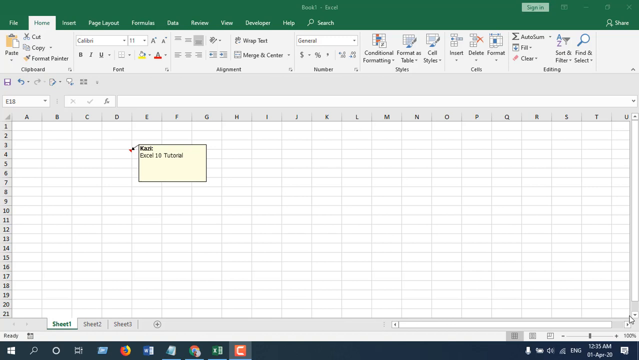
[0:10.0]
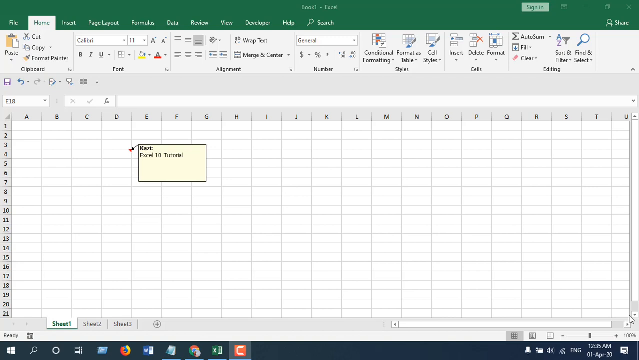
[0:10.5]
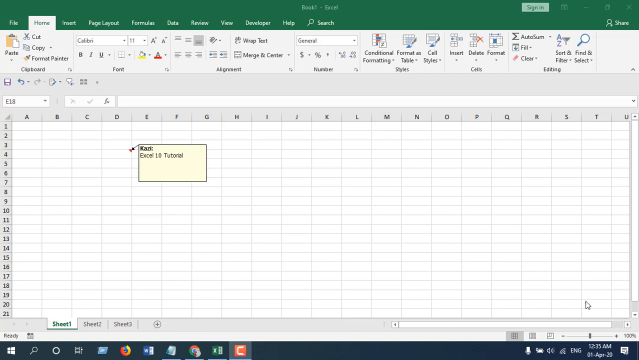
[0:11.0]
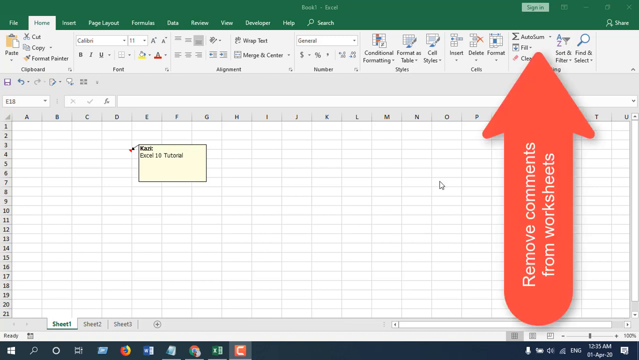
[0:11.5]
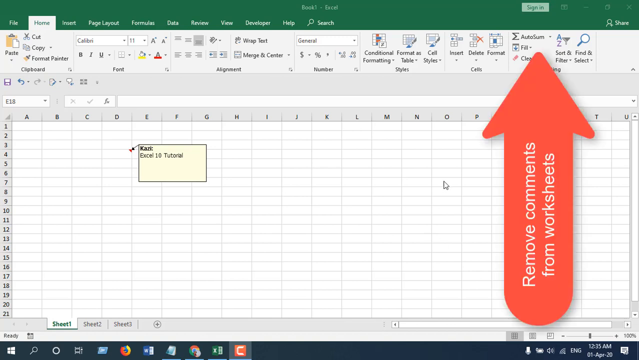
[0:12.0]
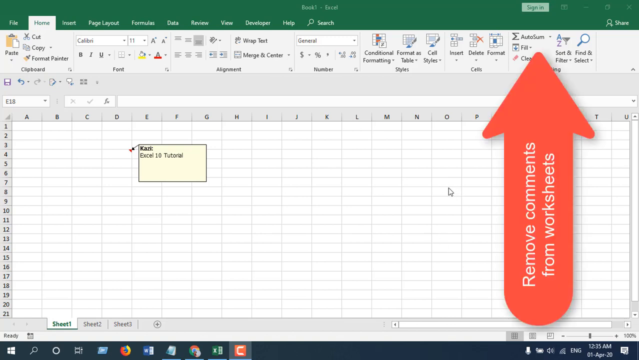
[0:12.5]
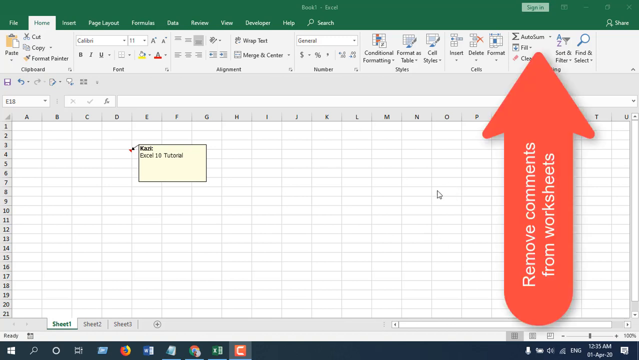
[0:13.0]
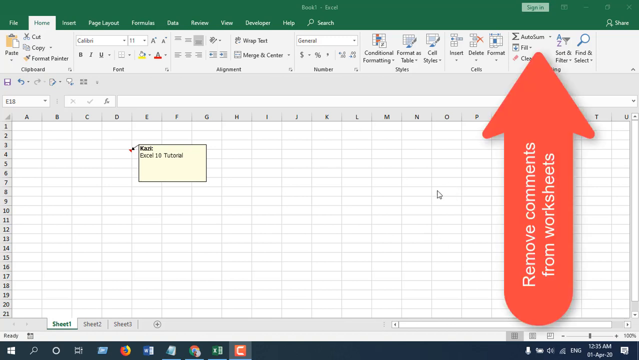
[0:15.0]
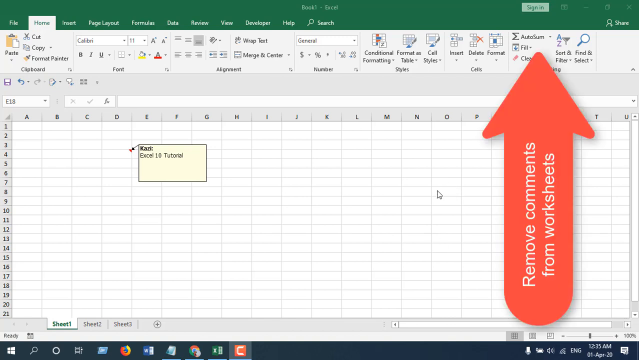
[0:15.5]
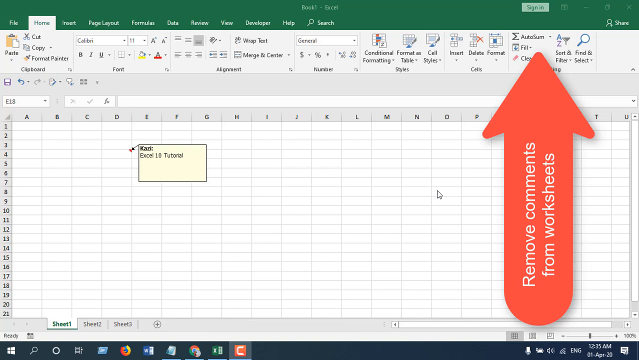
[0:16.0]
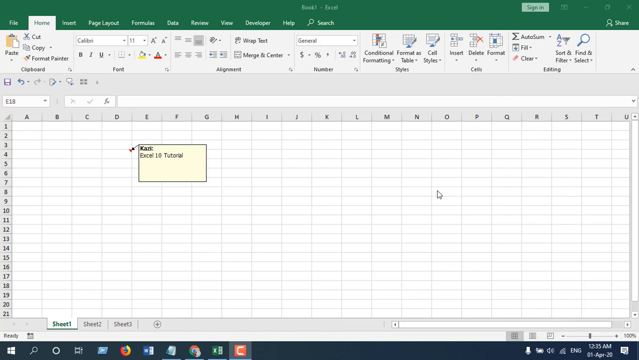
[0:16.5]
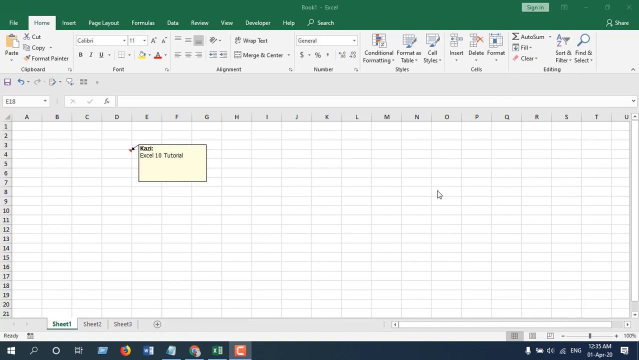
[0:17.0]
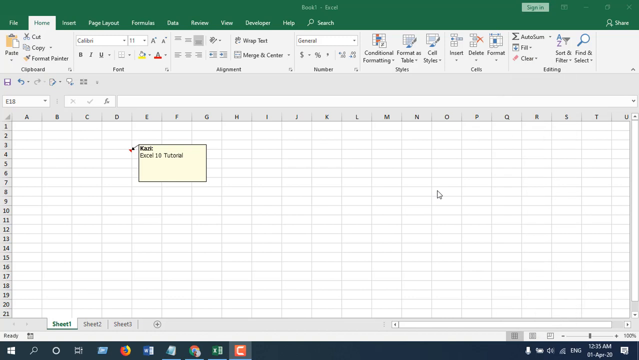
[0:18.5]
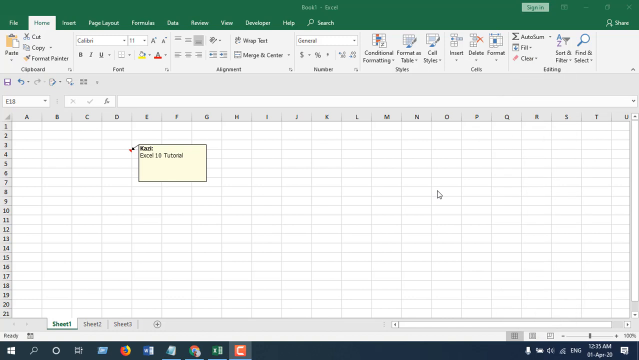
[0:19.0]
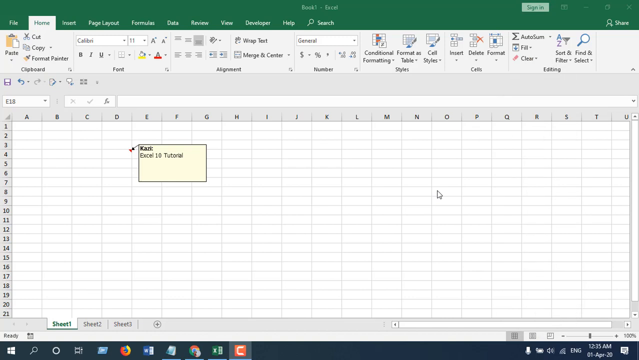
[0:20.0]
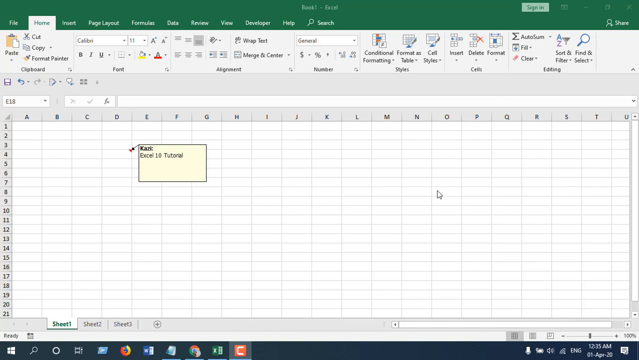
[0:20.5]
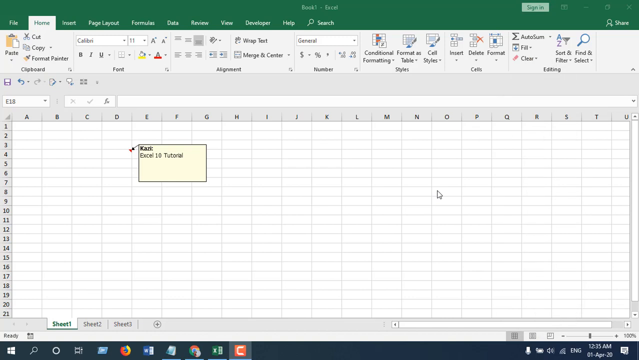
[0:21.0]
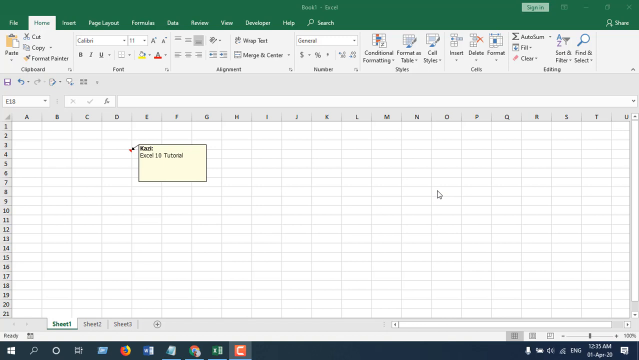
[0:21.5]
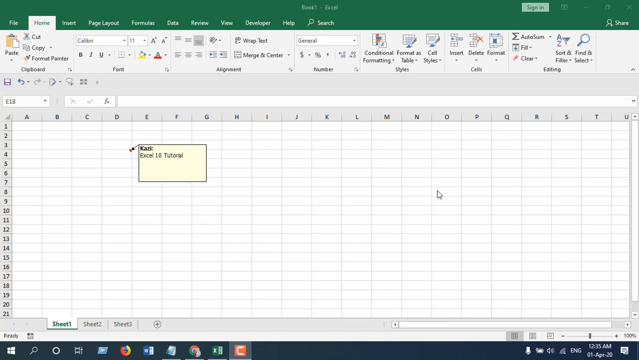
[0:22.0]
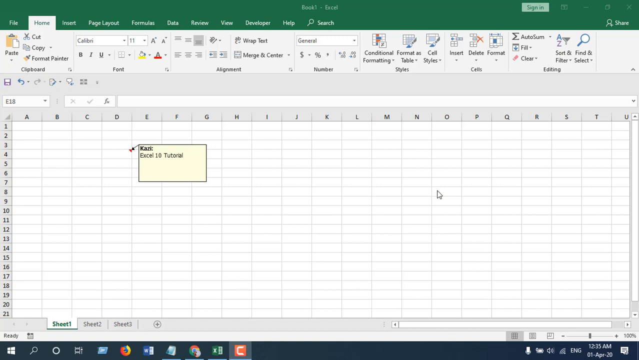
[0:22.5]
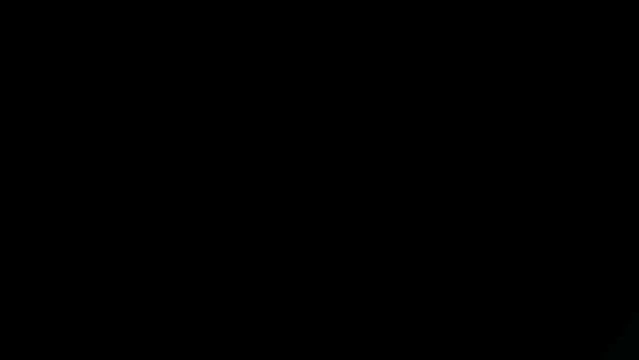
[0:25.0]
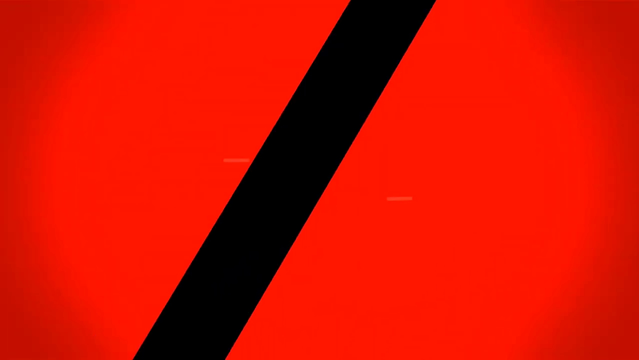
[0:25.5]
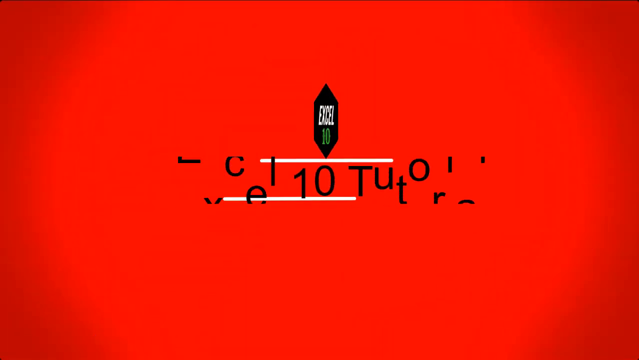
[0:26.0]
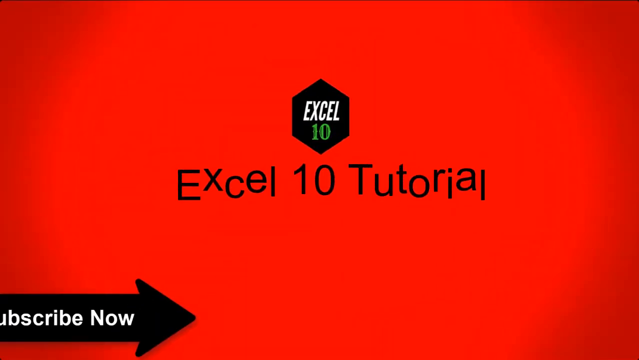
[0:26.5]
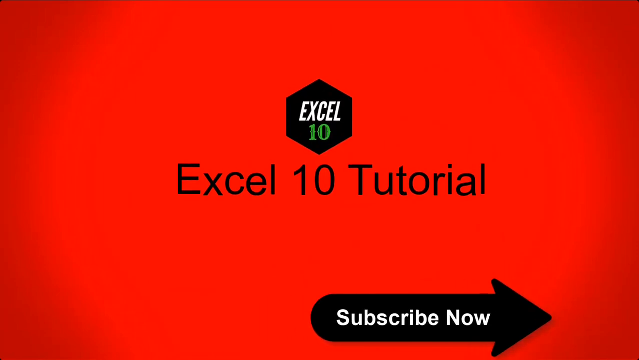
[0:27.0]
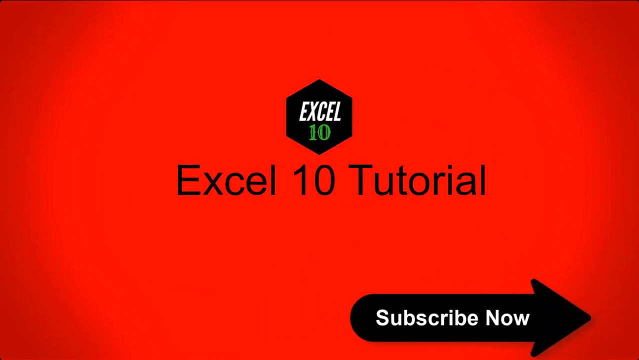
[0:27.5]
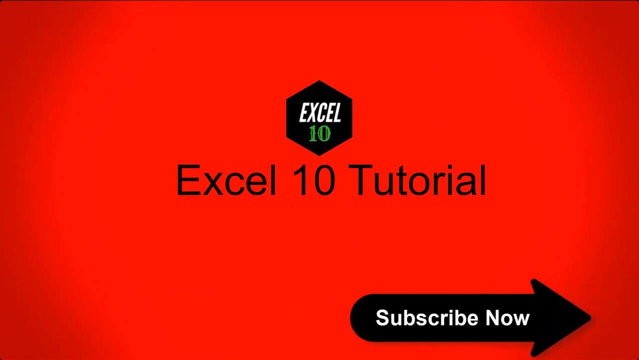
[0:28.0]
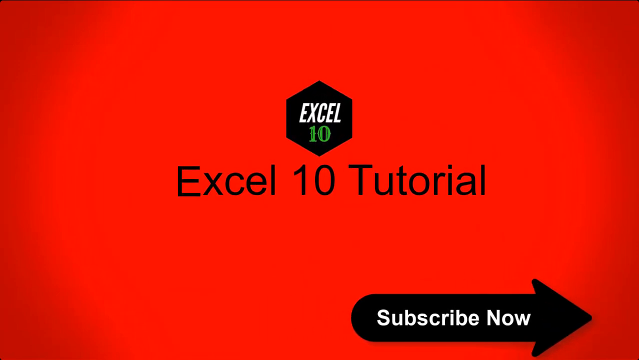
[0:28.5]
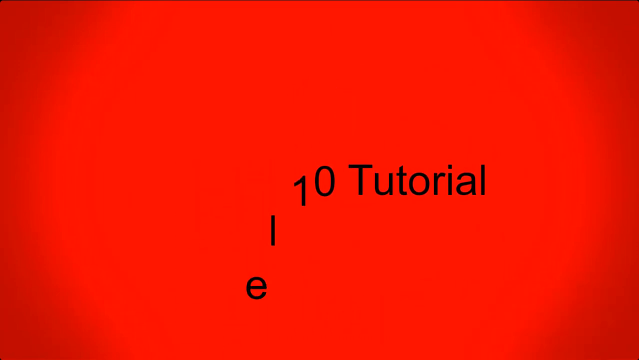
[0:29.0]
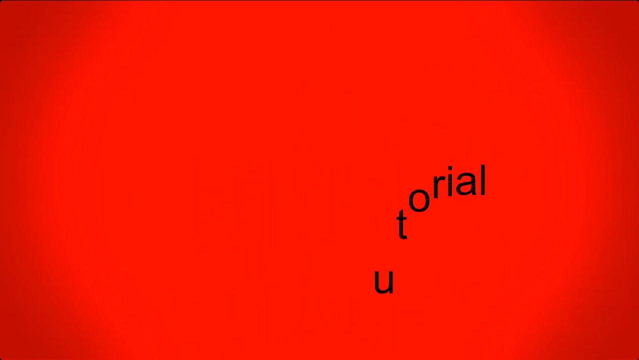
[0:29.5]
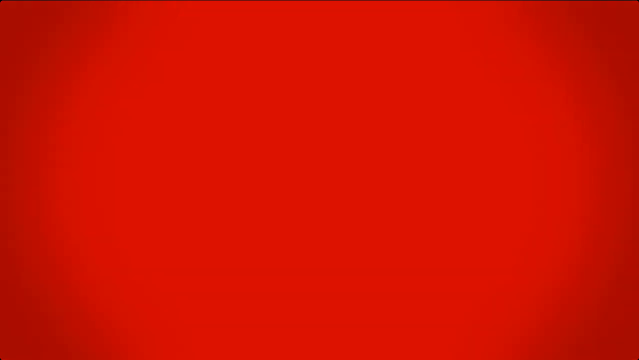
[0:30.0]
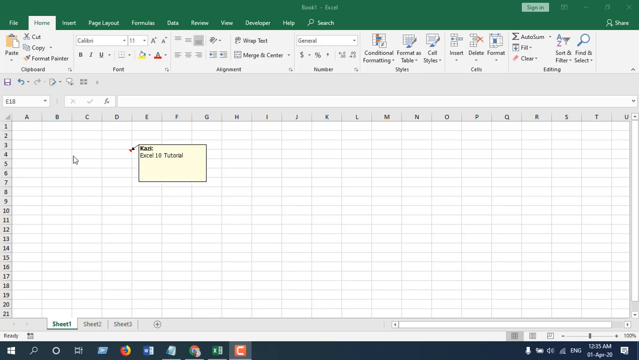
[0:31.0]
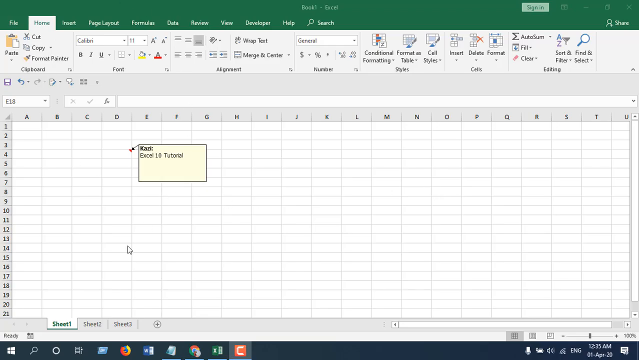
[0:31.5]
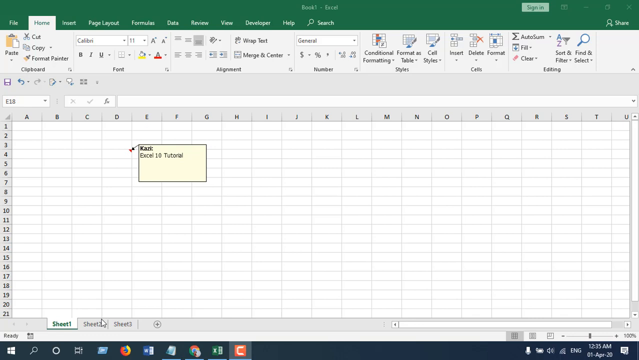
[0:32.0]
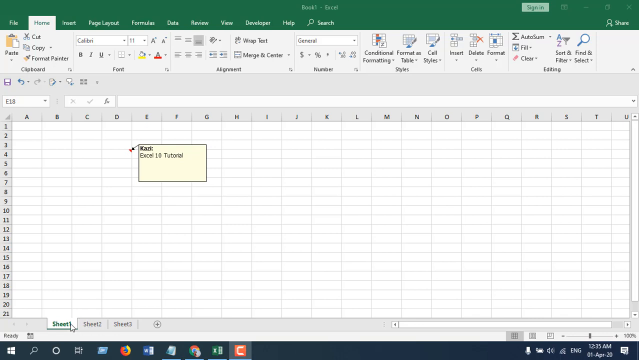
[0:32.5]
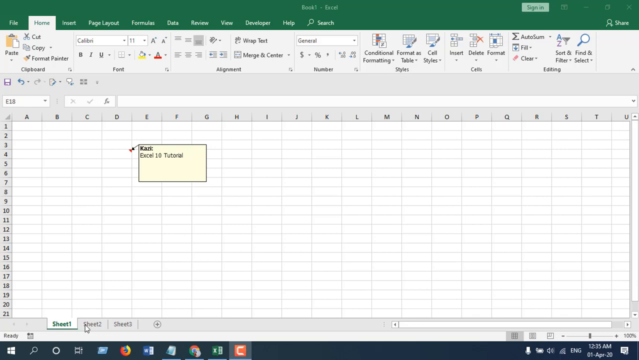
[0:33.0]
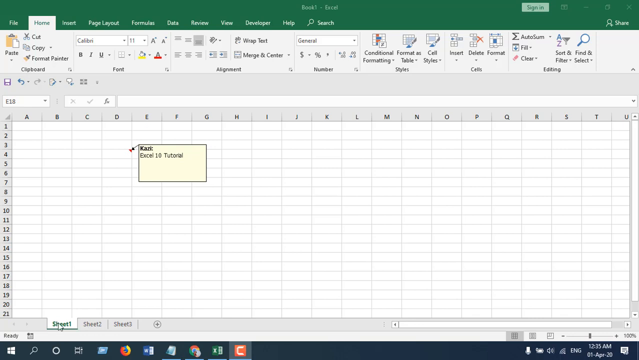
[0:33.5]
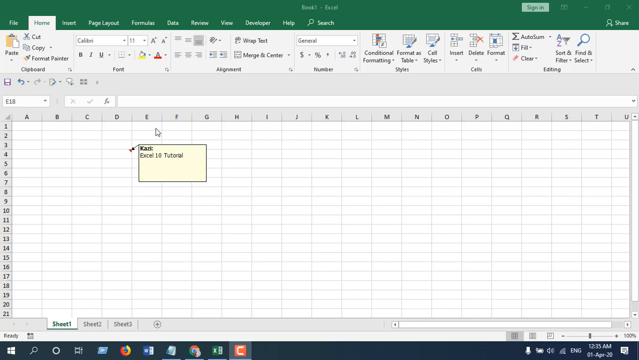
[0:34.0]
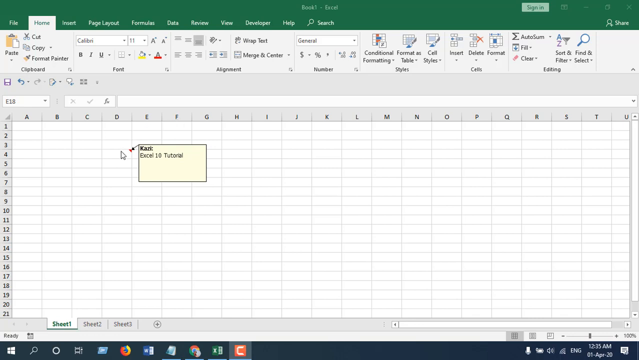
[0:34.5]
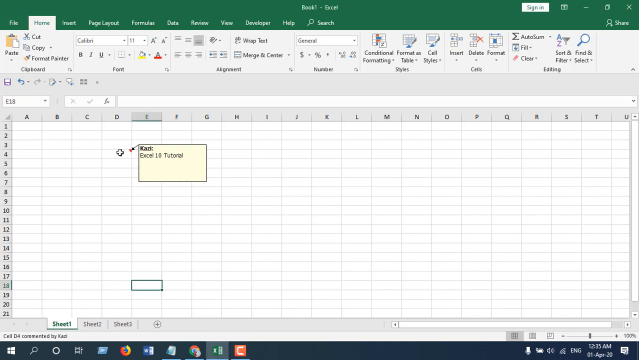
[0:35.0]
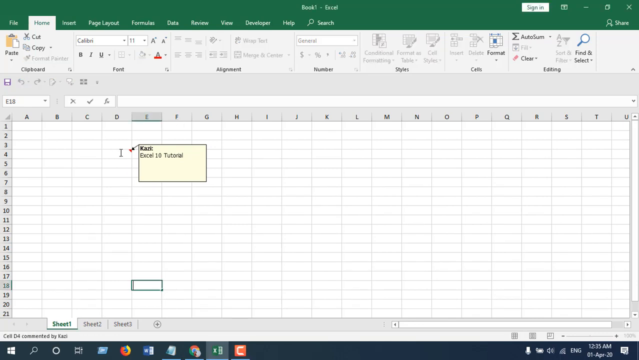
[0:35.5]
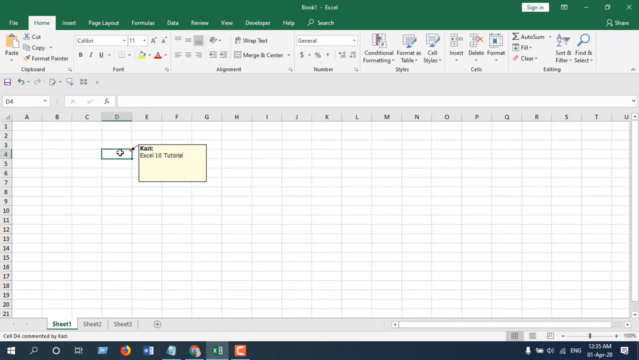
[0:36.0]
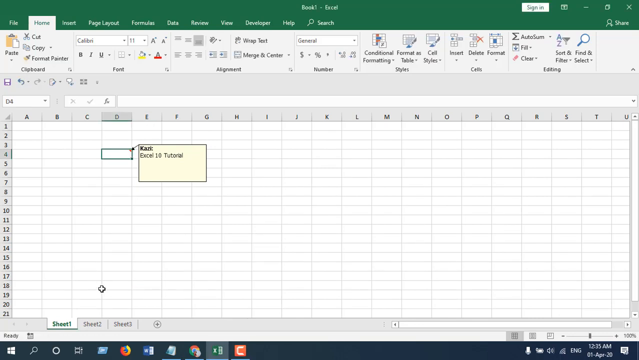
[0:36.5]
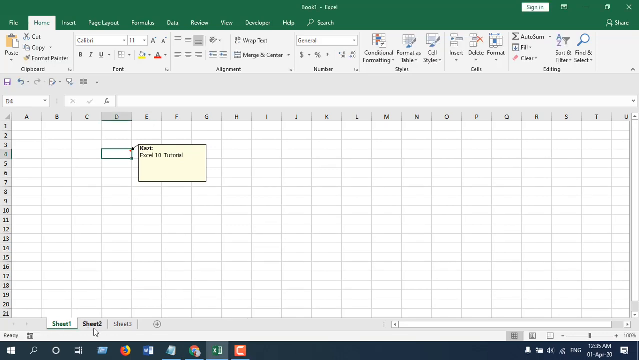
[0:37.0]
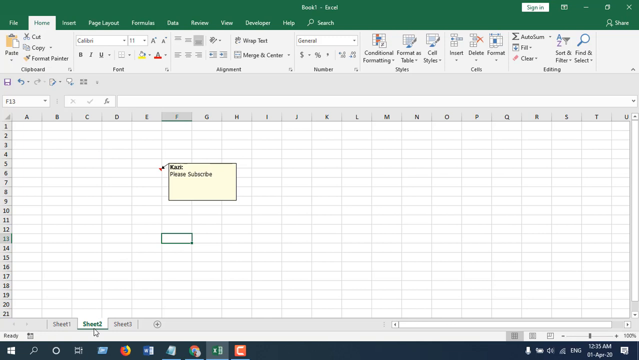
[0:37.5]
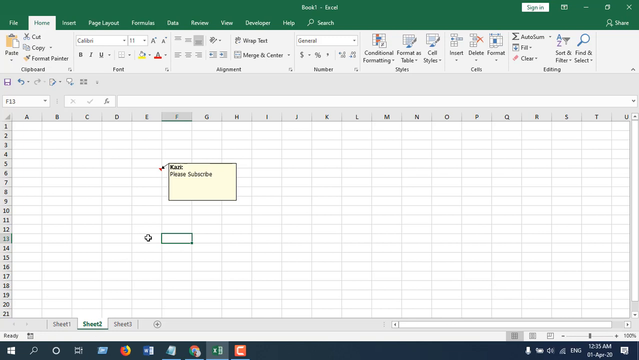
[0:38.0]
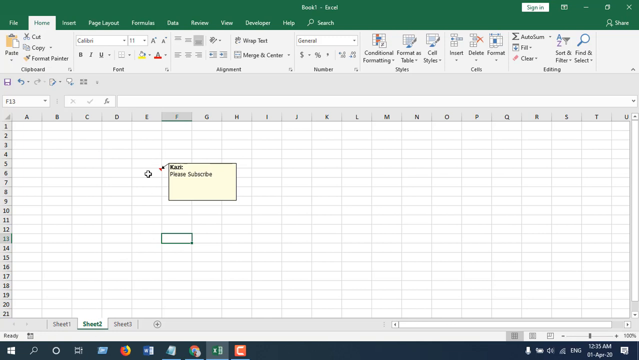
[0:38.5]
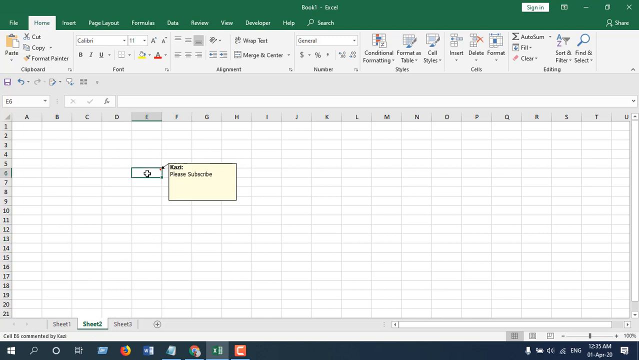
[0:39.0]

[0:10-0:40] A very large orange arrow appears, pointing upward. It is quite wide, covering the Q, R and S columns, and is rounded at the bottom. Vertical white sans-serif text on it reads "Remove comments from worksheets" on two lines, with only "Remove" capitalized. The arrow stops before reaching the green banner, then disappears, while the pale yellow text box remains. An opening graphic follows: on a black background, red comes in from the lower right and the upper left until the screen is all red. Black sans-serif letters reading "Excel 10 tutorial" come in and bounce up and down in a staggered way. Above them is a black six-sided hexagon with "EXCEL" in white capitals inside, and beneath it the number 10 in green. An arrow of the same shape as before, now black and facing right, reads "subscribe now" in white. The graphic goes away and the spreadsheet returns. A cursor moves around the pale yellow box and highlights cell D4, the yellow box seems to move to the F–H area, a cell around F13 is highlighted, and a small plus sign appears around F6.